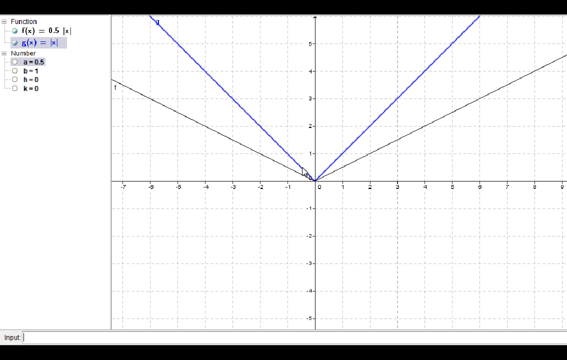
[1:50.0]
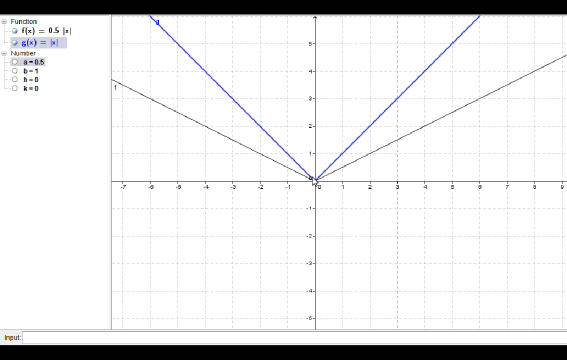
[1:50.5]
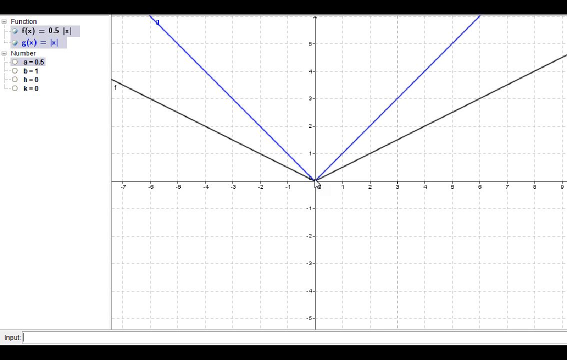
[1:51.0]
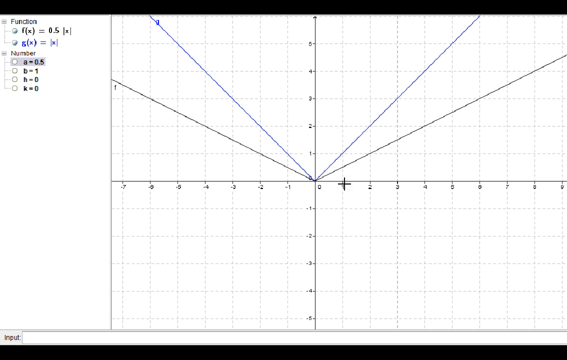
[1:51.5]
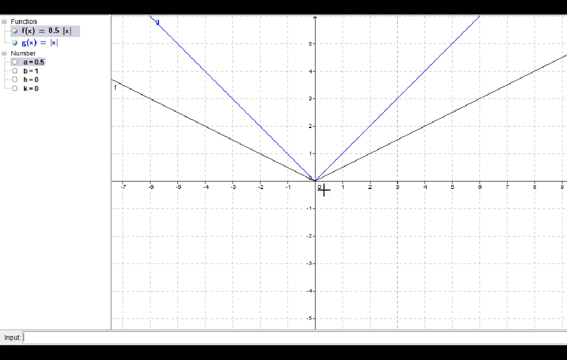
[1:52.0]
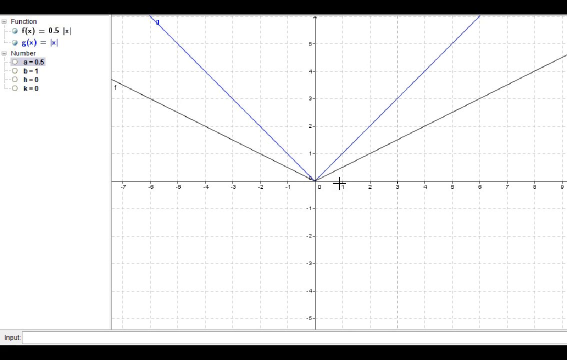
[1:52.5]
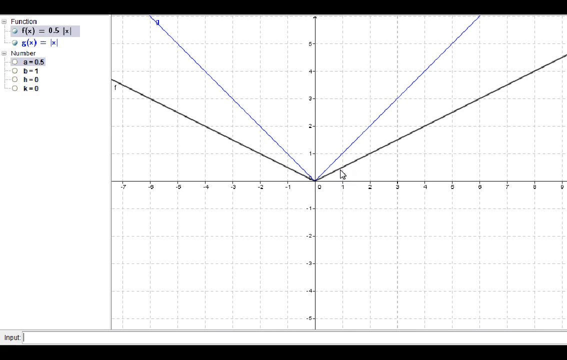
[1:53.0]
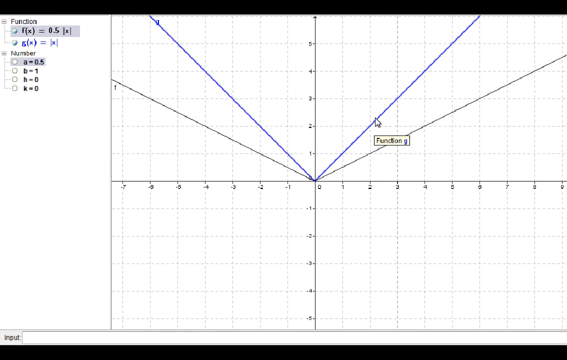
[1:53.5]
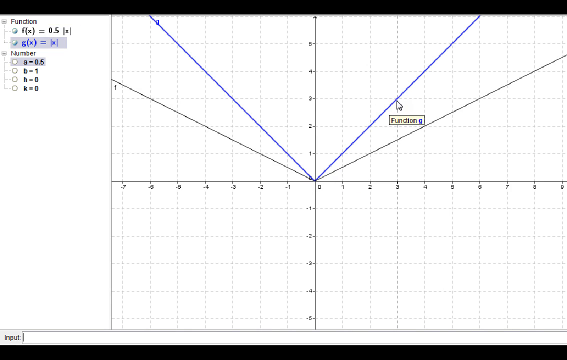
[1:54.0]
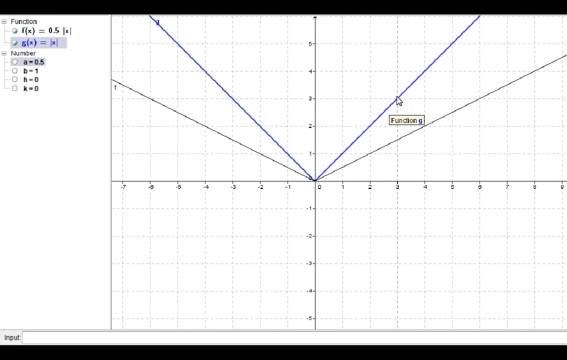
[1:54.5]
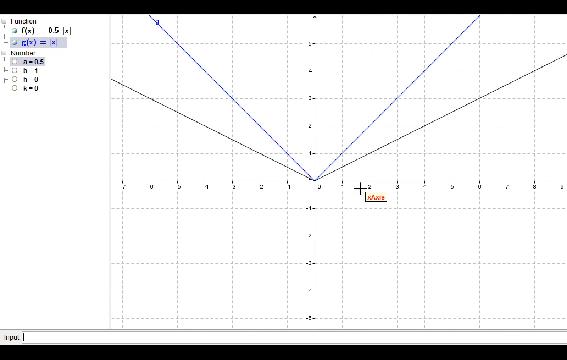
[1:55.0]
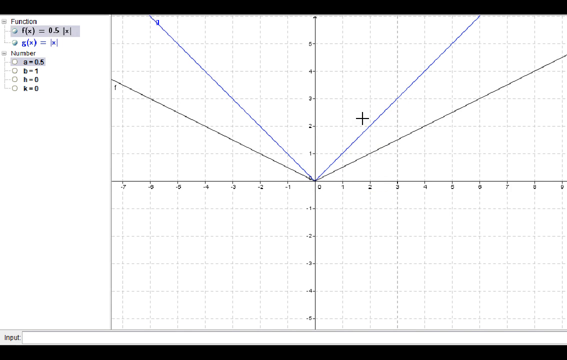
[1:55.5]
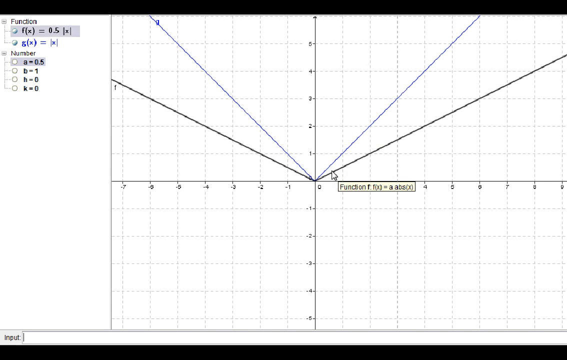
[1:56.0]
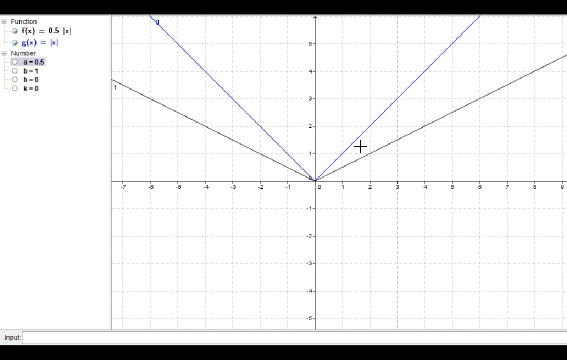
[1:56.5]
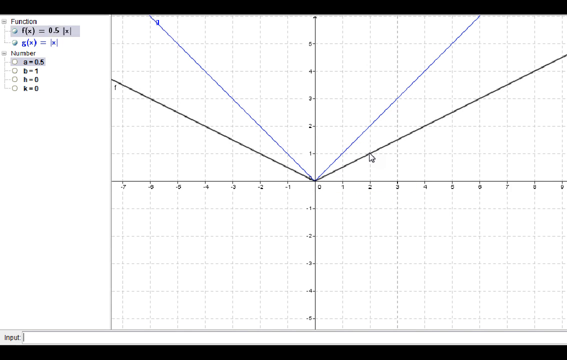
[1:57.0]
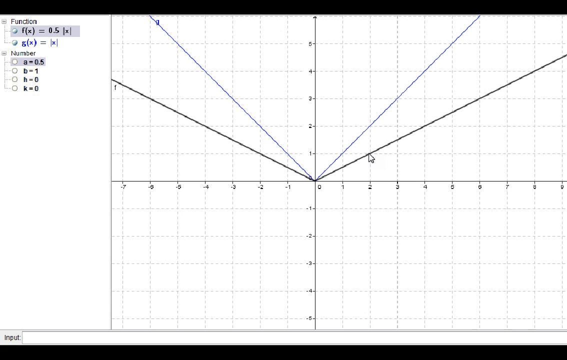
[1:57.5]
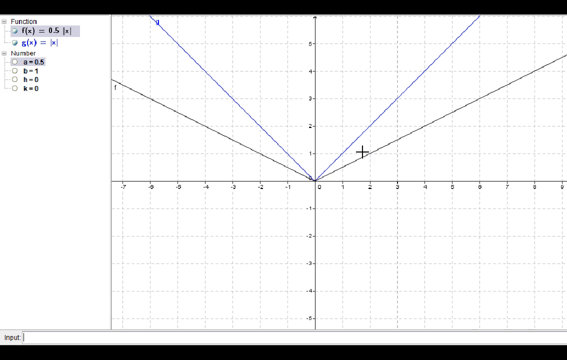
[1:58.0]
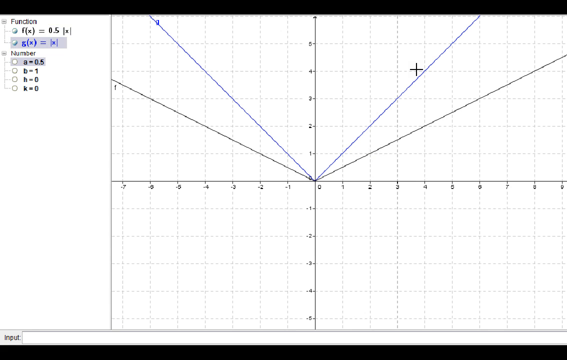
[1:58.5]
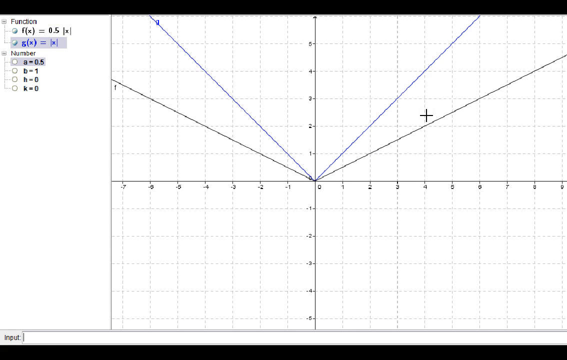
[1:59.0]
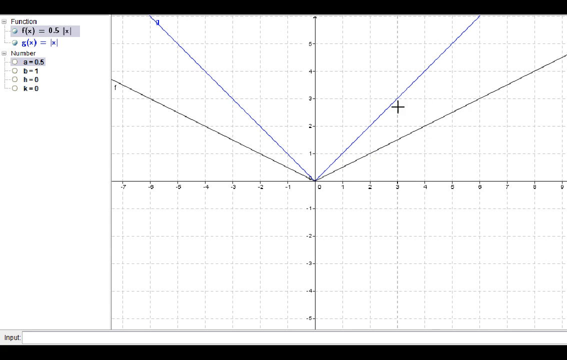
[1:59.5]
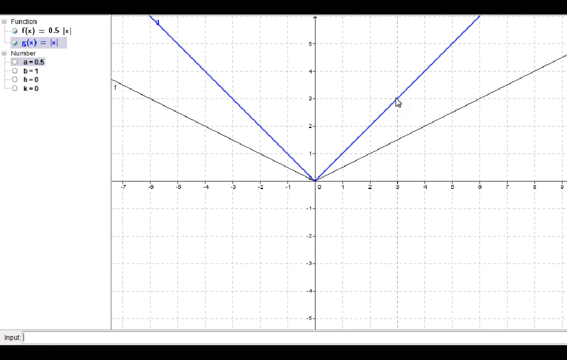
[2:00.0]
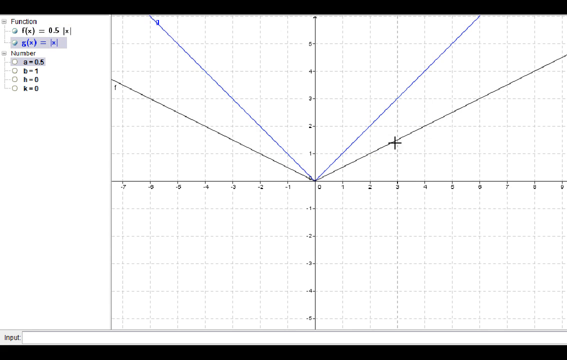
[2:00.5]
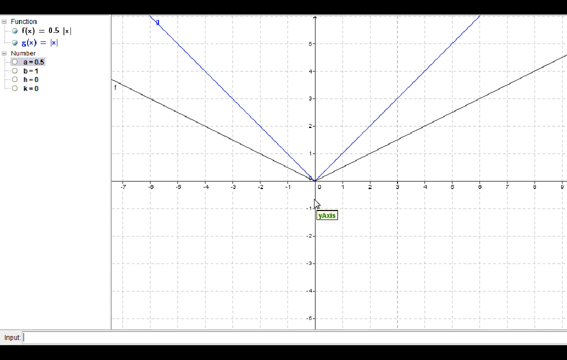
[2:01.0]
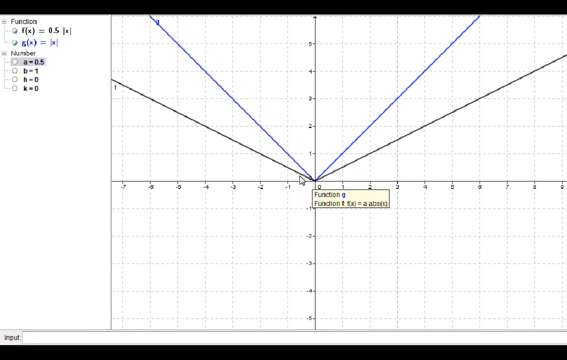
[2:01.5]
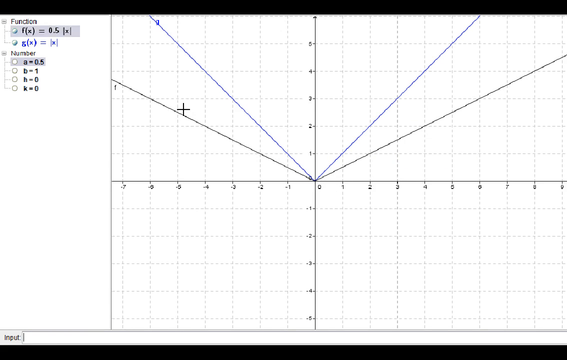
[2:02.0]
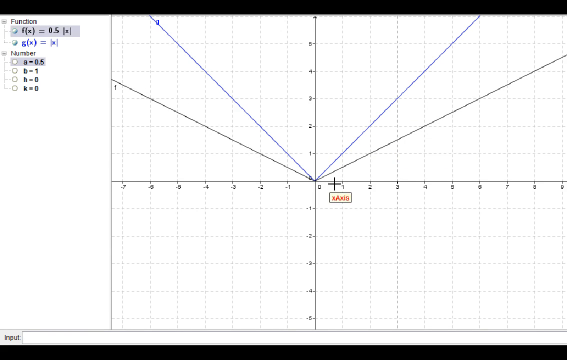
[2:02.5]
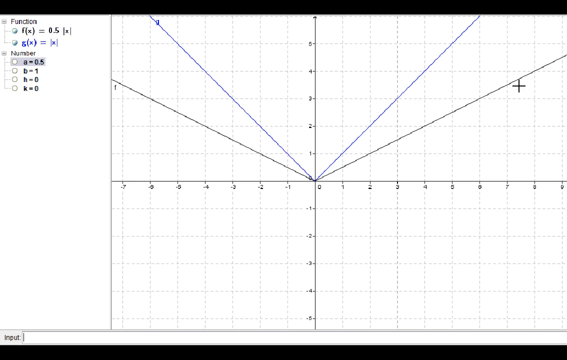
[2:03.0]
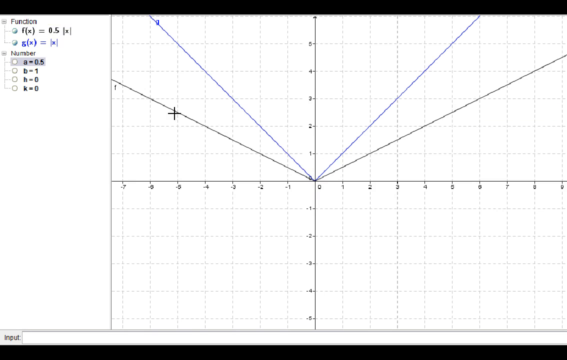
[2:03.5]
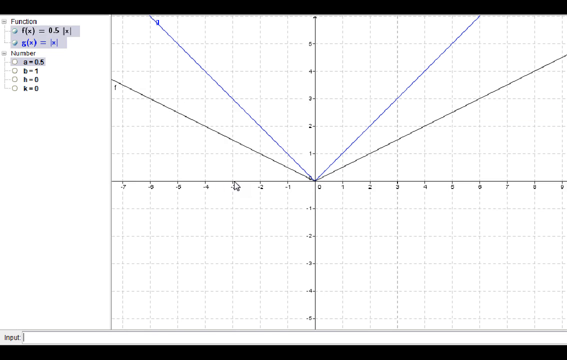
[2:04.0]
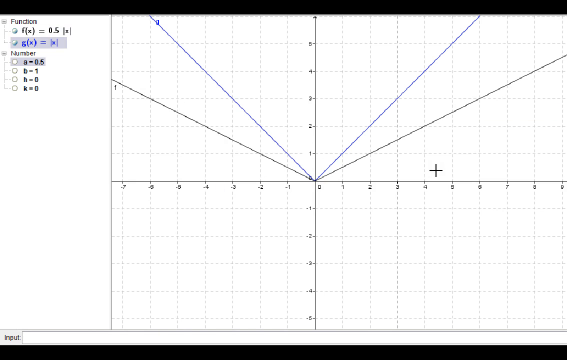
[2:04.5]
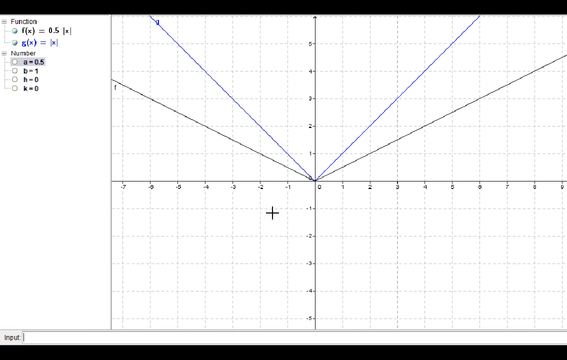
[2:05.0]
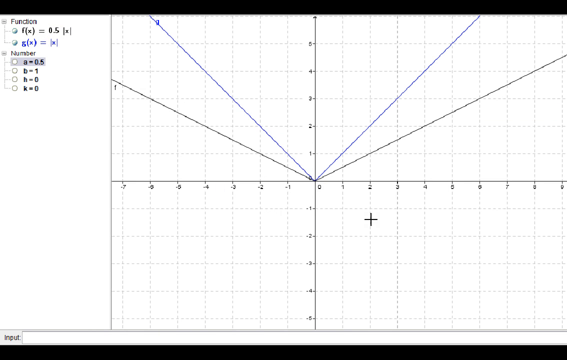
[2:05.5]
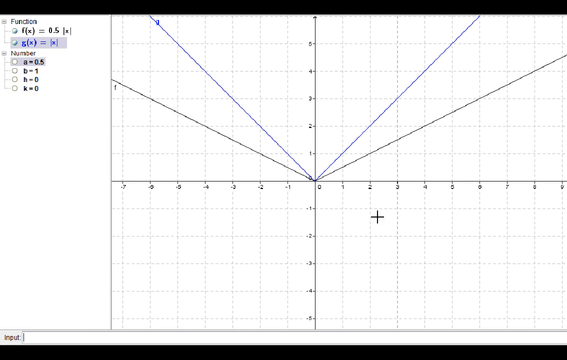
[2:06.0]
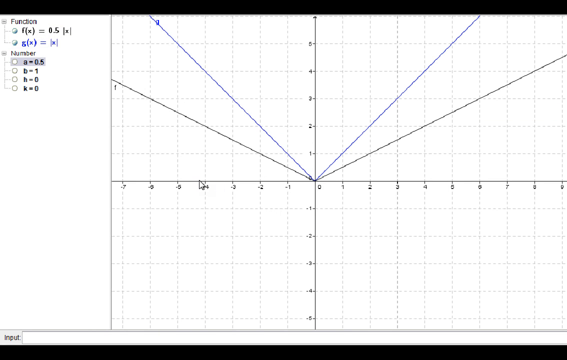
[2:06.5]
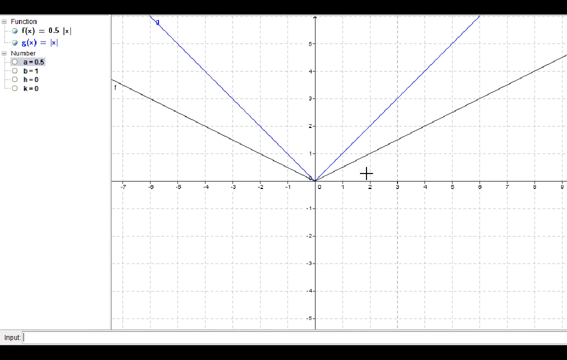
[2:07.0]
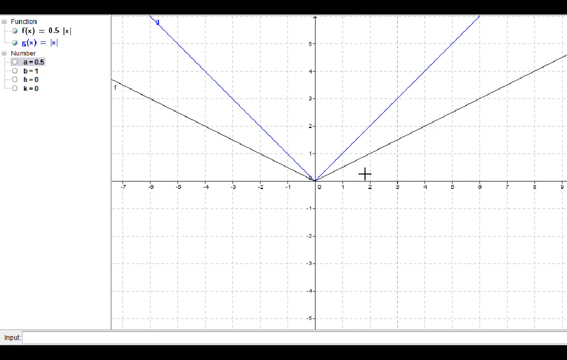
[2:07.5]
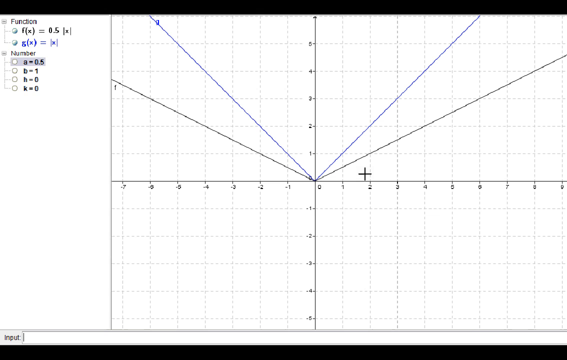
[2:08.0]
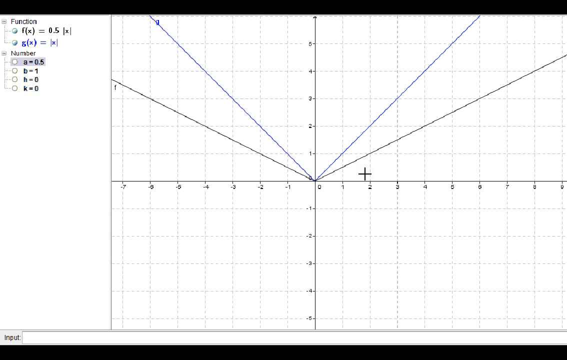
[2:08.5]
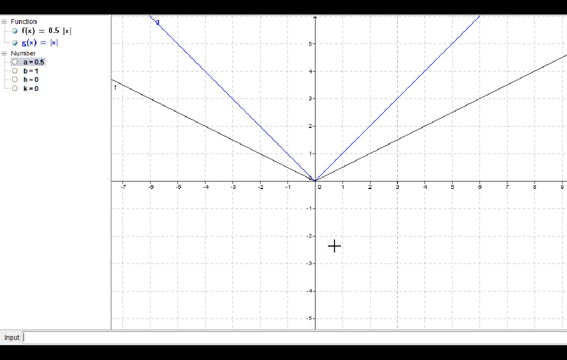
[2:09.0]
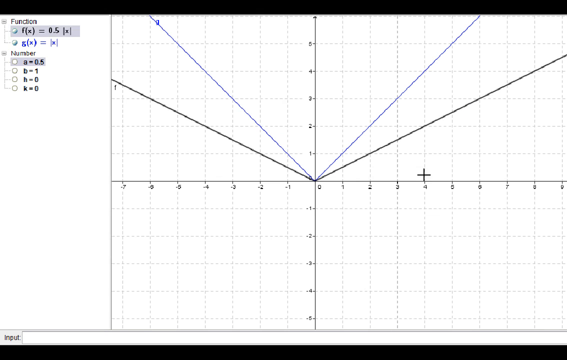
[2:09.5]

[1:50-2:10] Different line functions continue to be shown, their view changing as the person controlling the screen changes the input values on the left-hand side. The person then hovers over a few of the lines. The setting stays on the sort of hexagonal grid / 2D graph background, and no humans or animals appear.